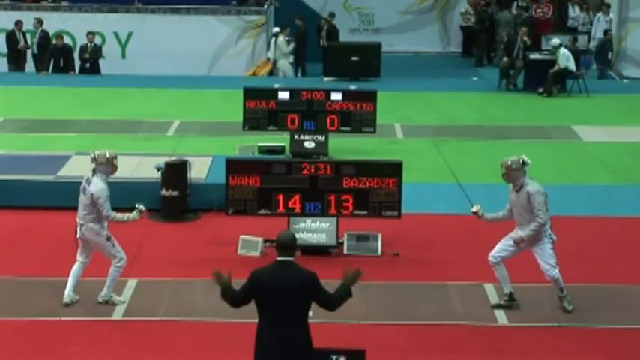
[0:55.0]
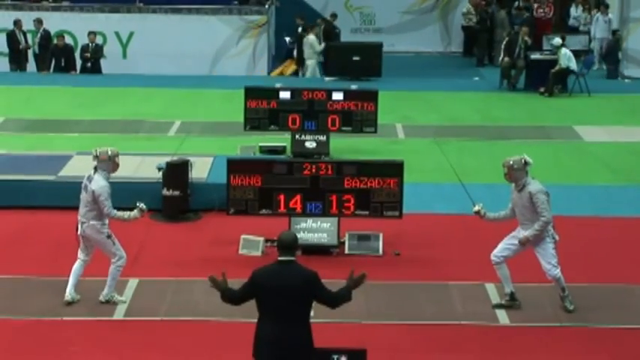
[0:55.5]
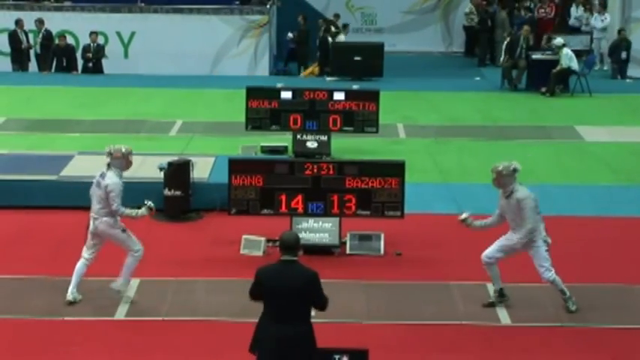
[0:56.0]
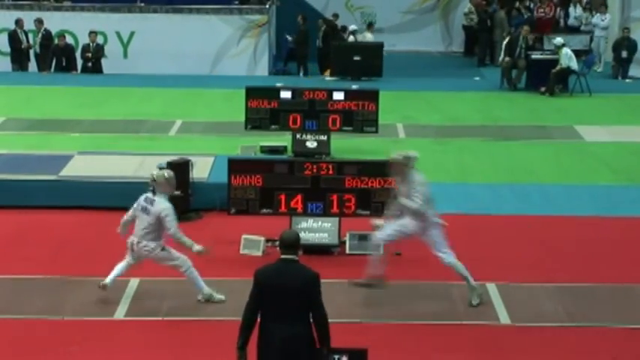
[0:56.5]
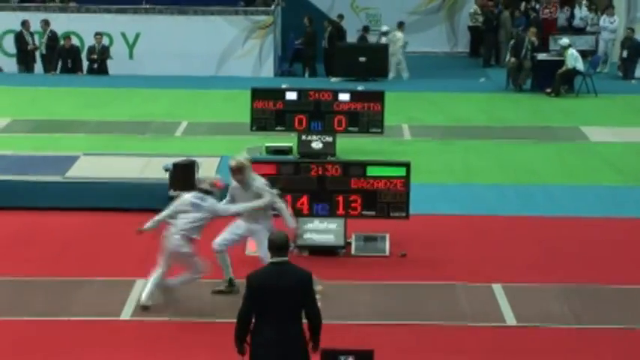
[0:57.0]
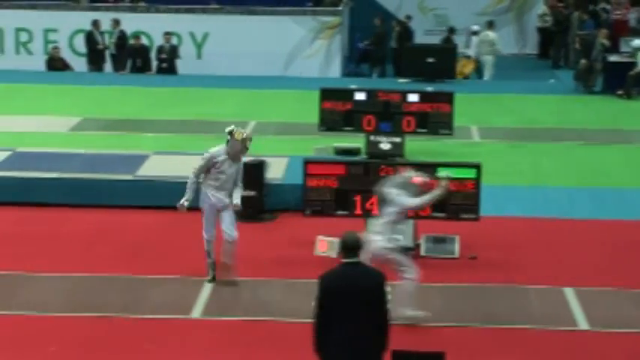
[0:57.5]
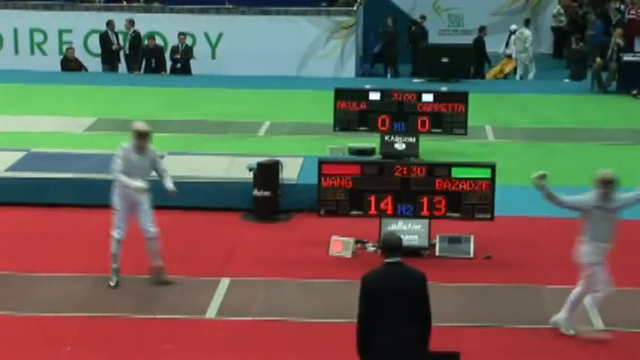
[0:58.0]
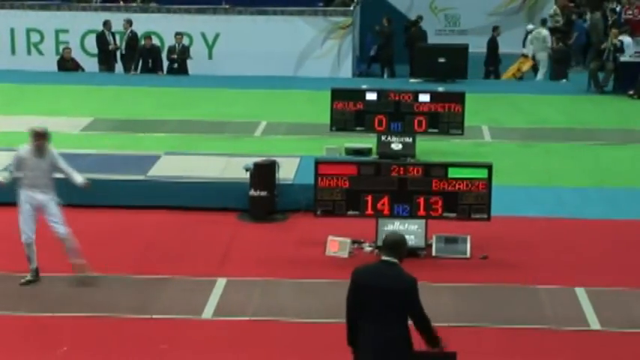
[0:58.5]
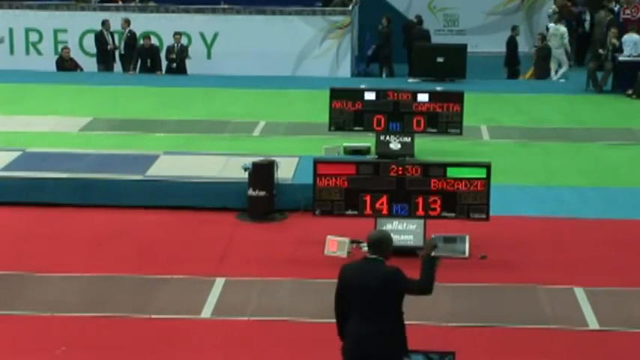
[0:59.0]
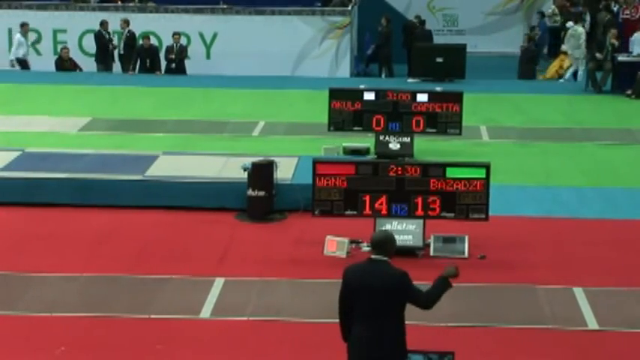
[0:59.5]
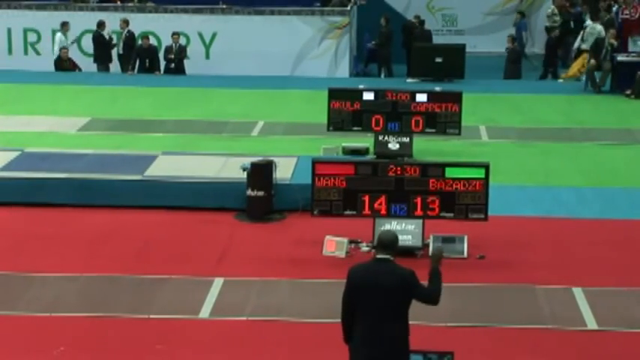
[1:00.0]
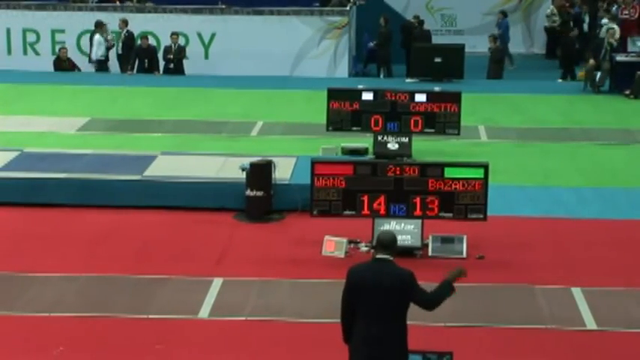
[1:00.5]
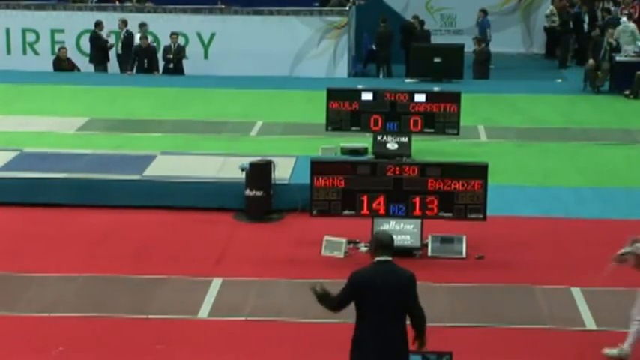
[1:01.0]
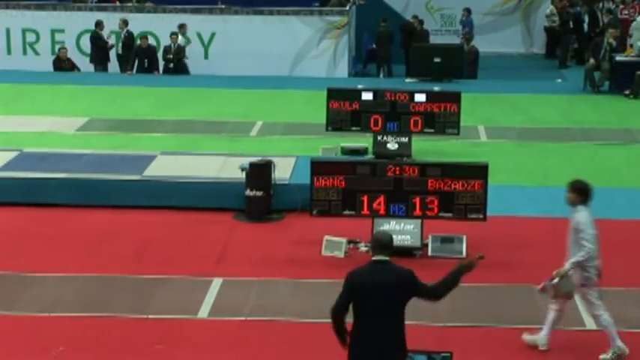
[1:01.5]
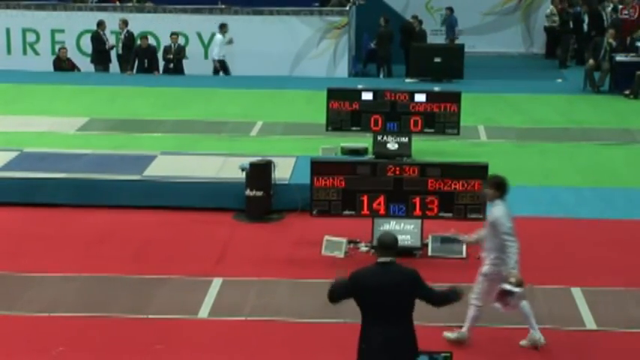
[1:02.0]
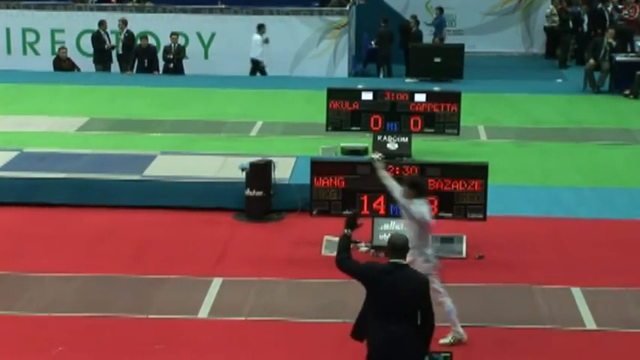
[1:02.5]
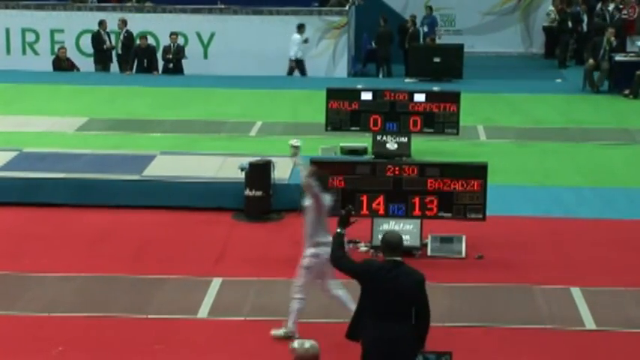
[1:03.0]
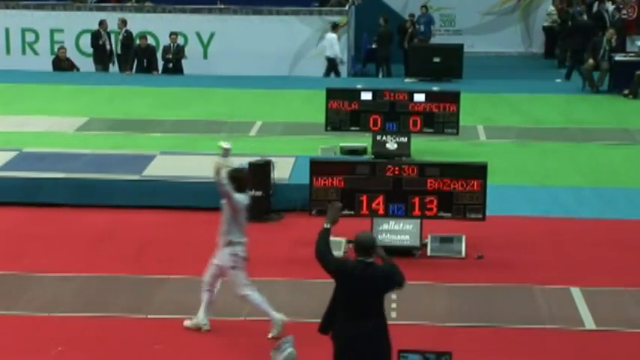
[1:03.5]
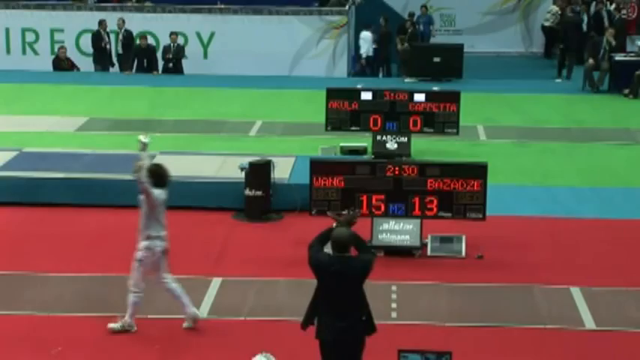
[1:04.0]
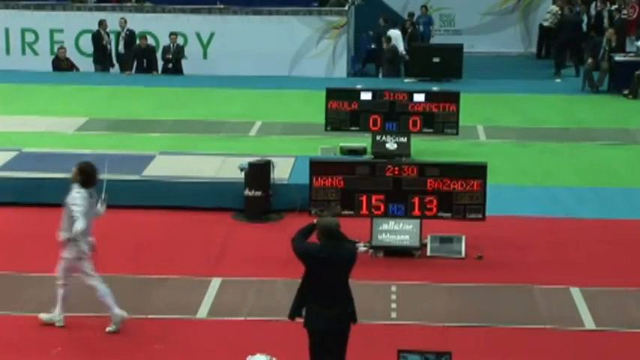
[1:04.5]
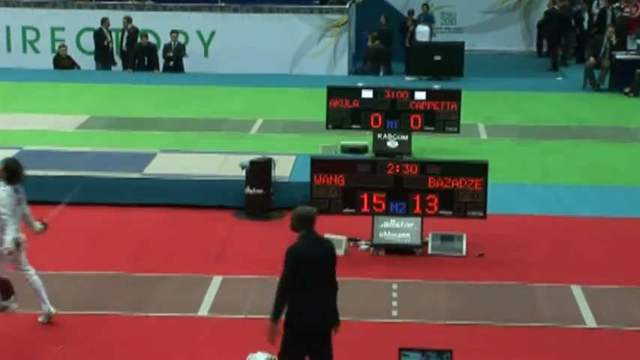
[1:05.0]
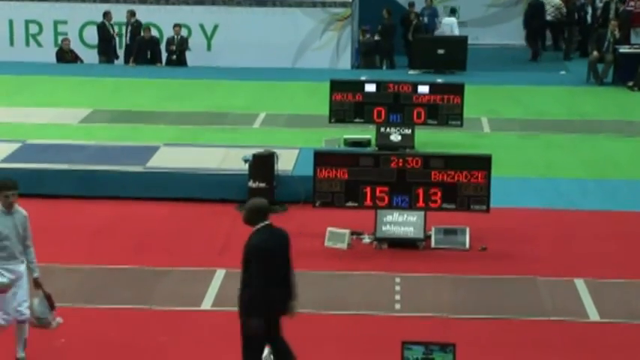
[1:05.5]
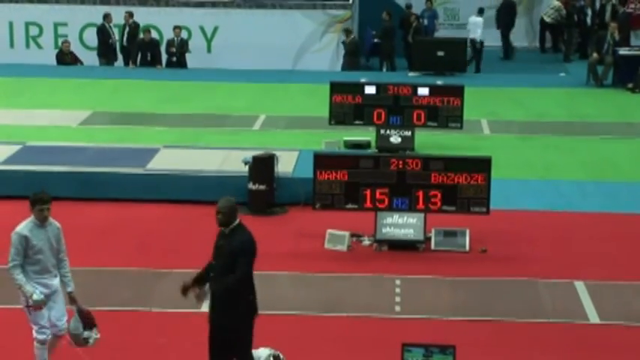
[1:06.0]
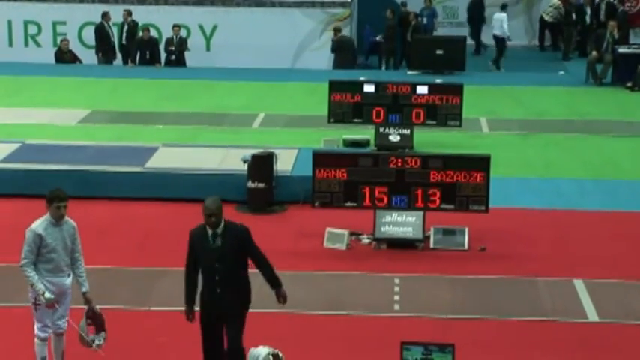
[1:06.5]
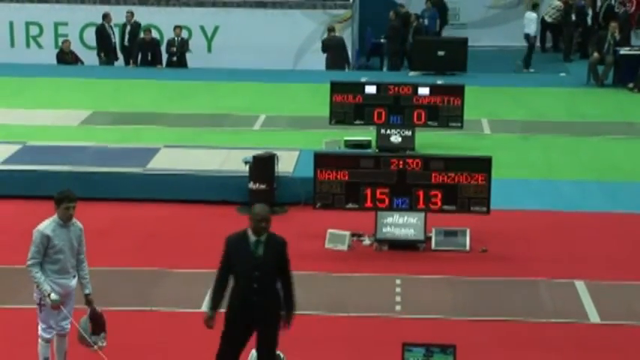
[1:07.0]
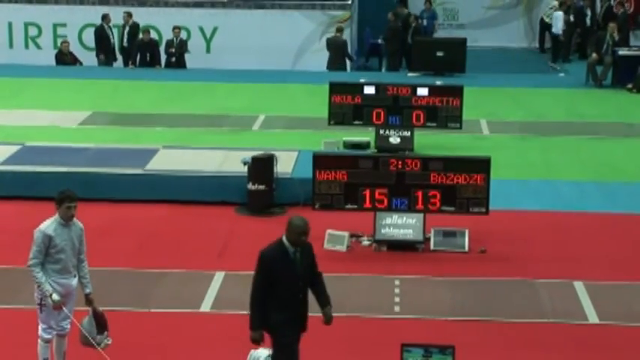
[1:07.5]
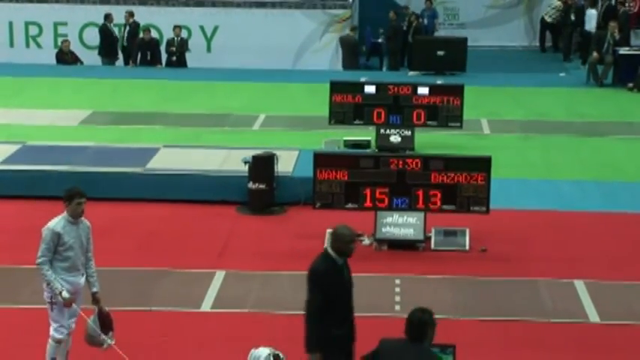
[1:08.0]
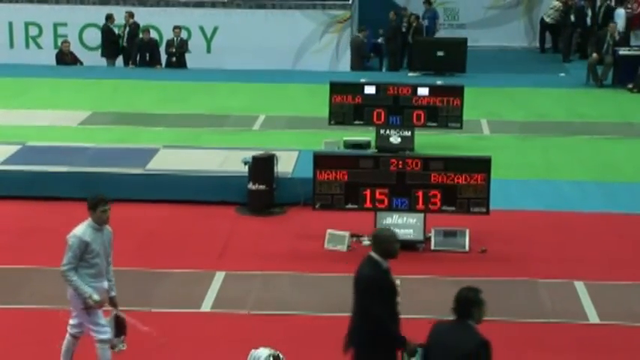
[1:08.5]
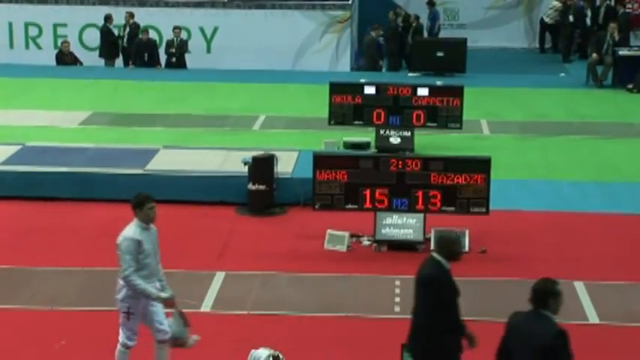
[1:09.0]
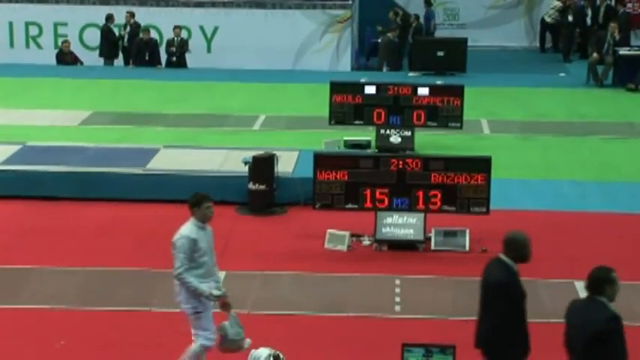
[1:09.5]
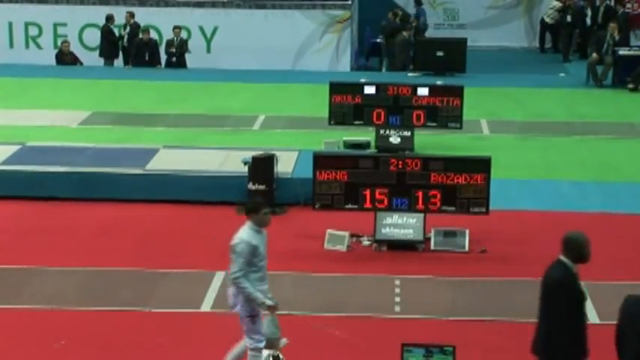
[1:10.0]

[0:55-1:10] Two male fencers compete in a fencing match. The scoreboard behind them displays their names and the score, with Wang up 1 point, 14 to 13 over Bazadze. In what looks like the end of the match, Wang scores another point in the next scuffle, taking the score to 15 Wang, 13 Bazadze, and winning the match. The referee appears to call the match for Wang, making somewhat of an X motion with their hands to show the crowd watching that the match is over. The match appears to be part of some sort of fencing tournament.